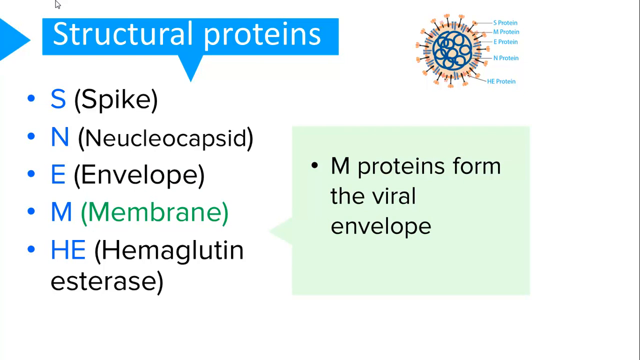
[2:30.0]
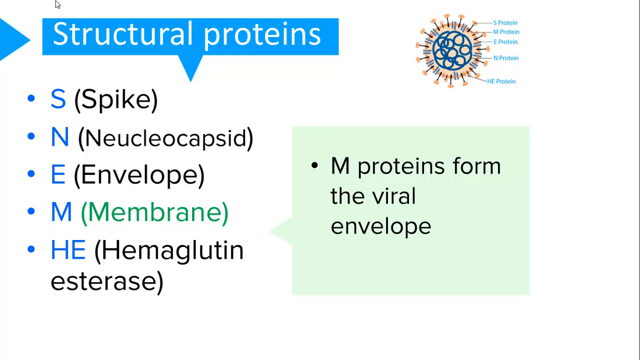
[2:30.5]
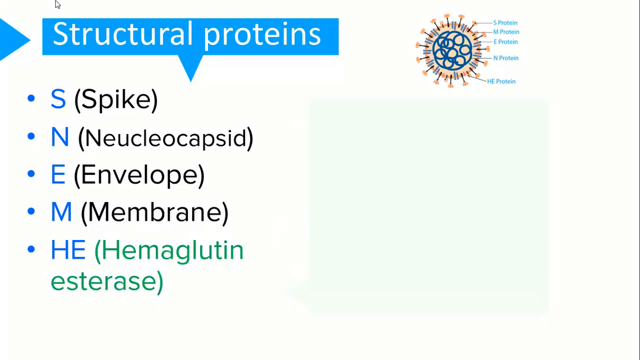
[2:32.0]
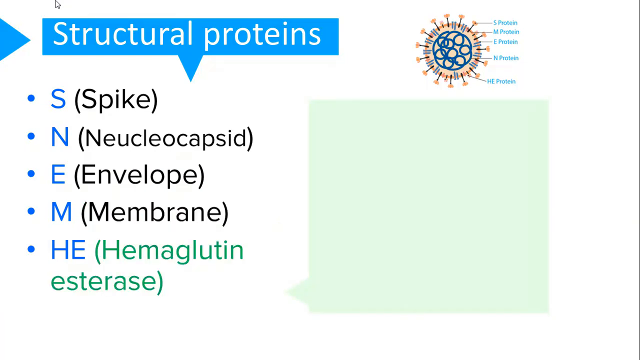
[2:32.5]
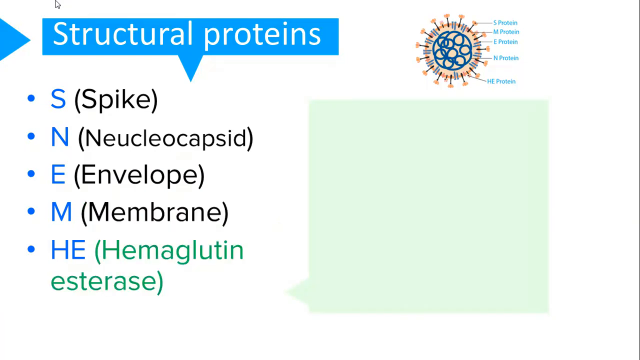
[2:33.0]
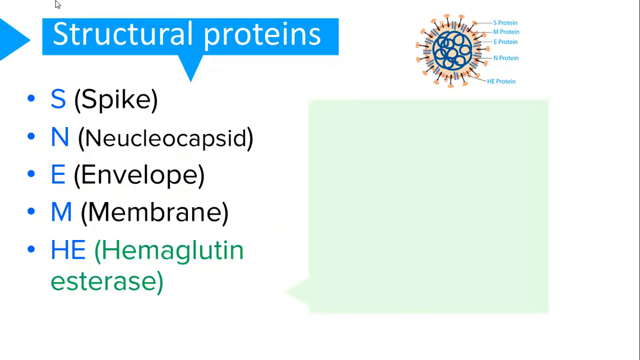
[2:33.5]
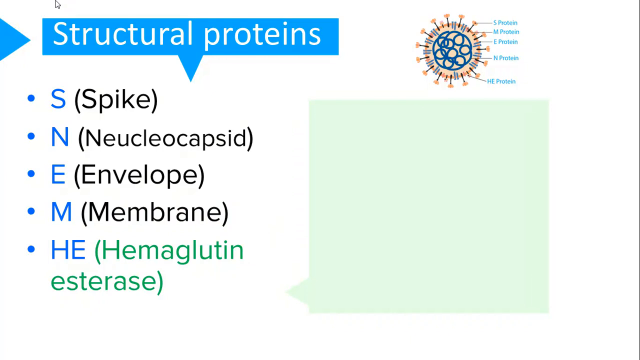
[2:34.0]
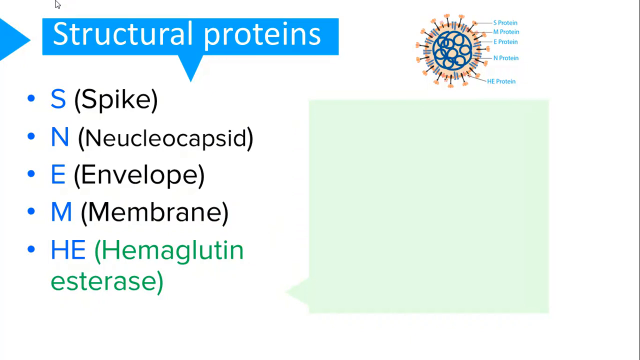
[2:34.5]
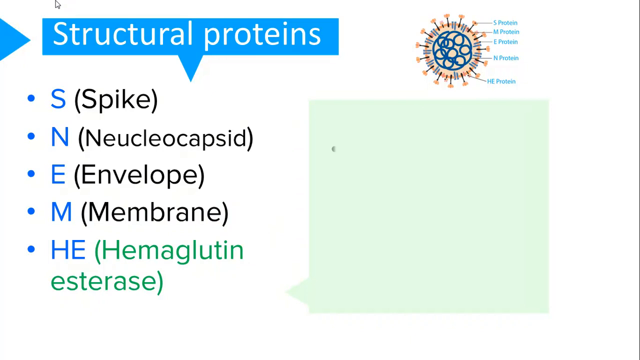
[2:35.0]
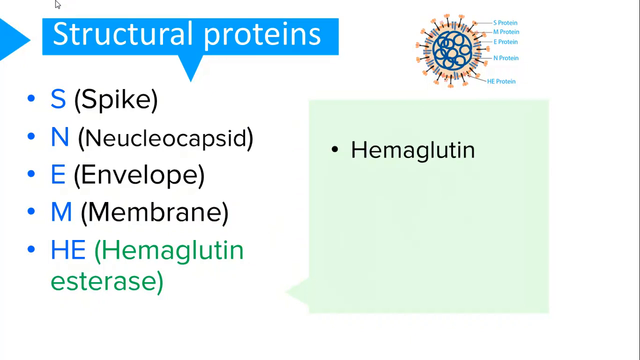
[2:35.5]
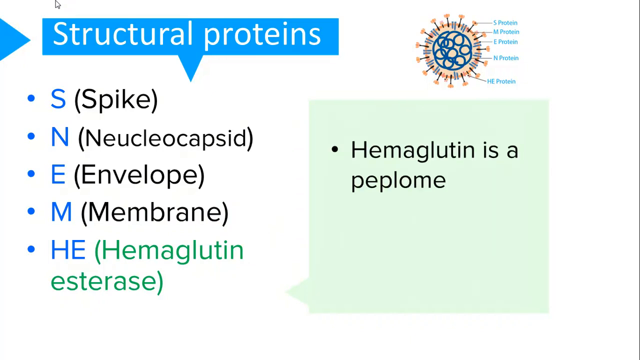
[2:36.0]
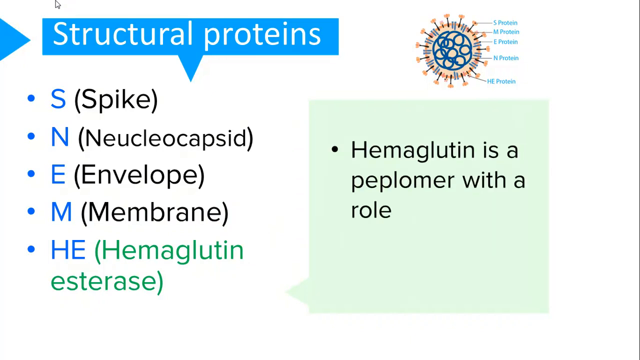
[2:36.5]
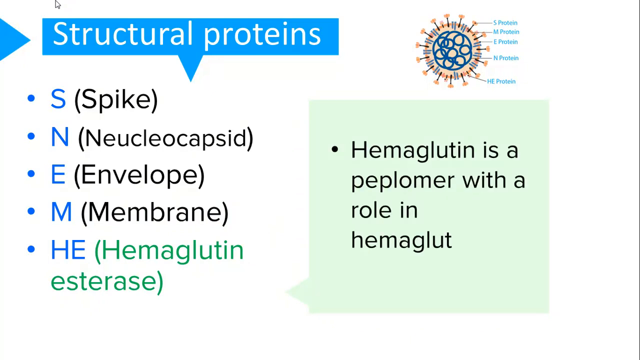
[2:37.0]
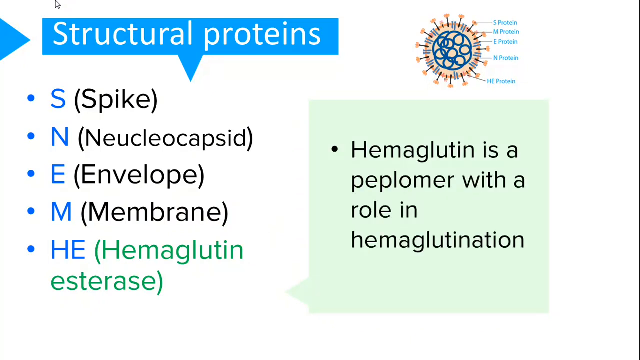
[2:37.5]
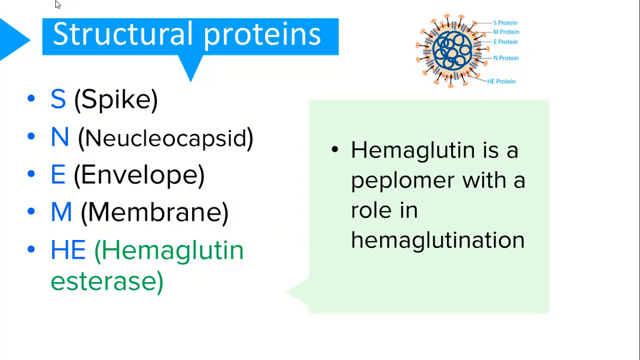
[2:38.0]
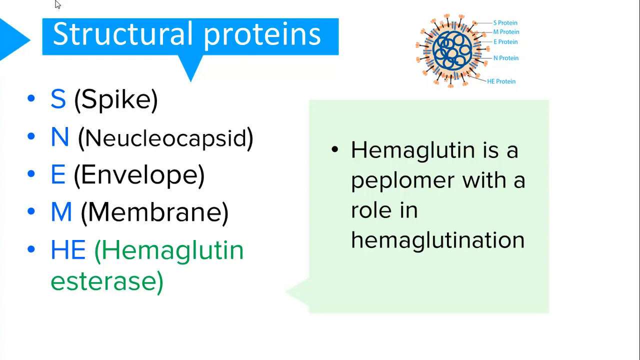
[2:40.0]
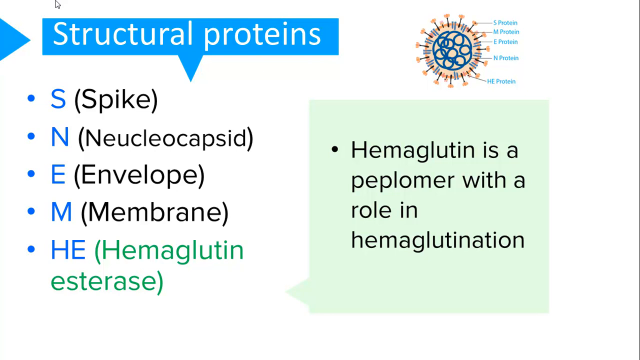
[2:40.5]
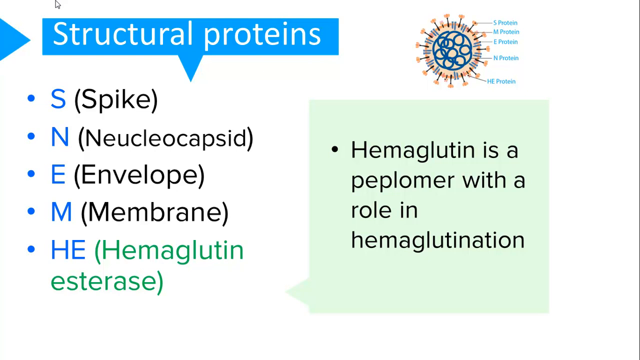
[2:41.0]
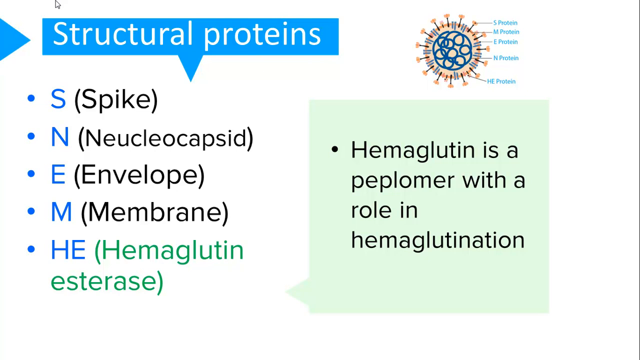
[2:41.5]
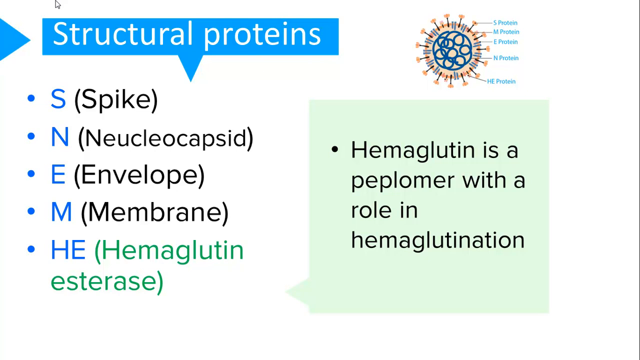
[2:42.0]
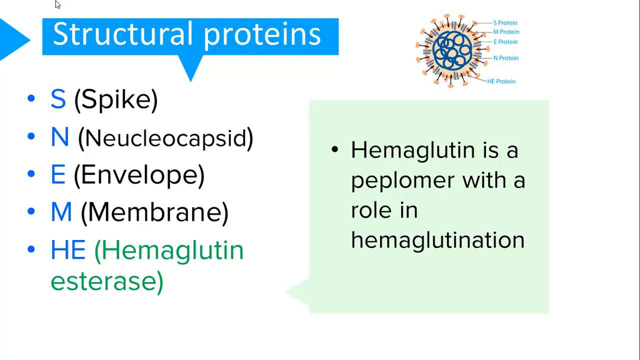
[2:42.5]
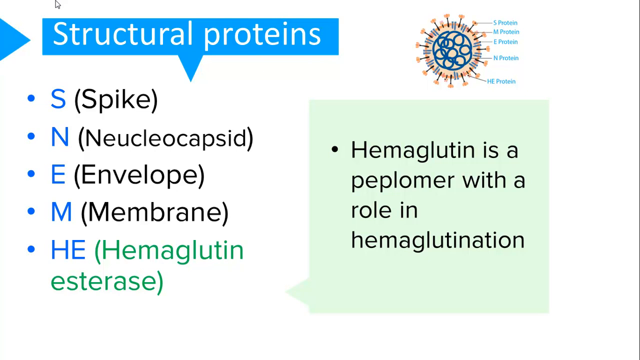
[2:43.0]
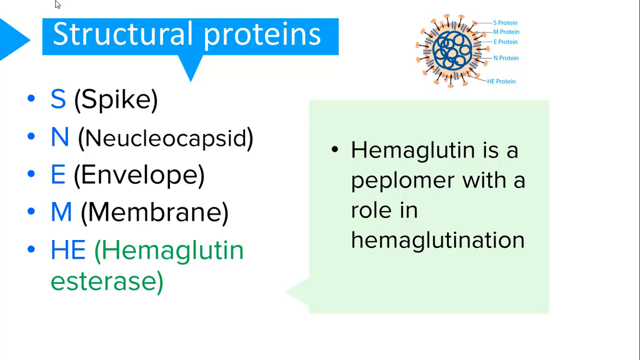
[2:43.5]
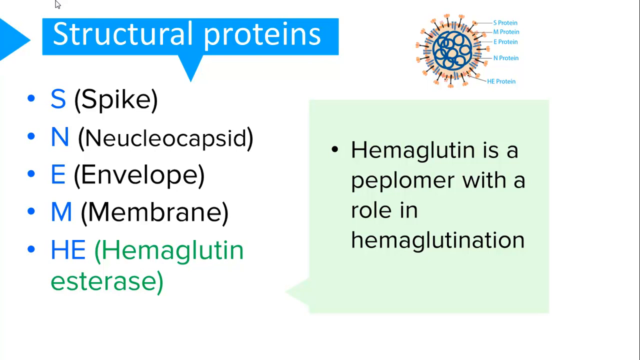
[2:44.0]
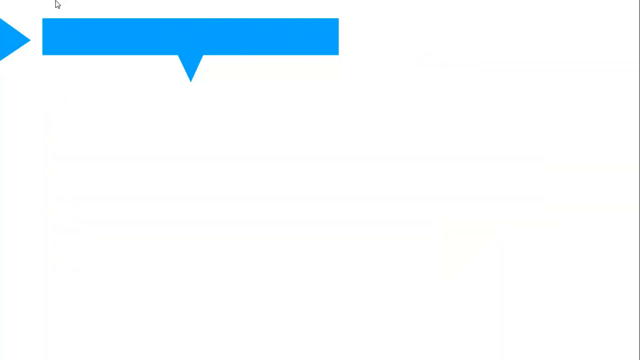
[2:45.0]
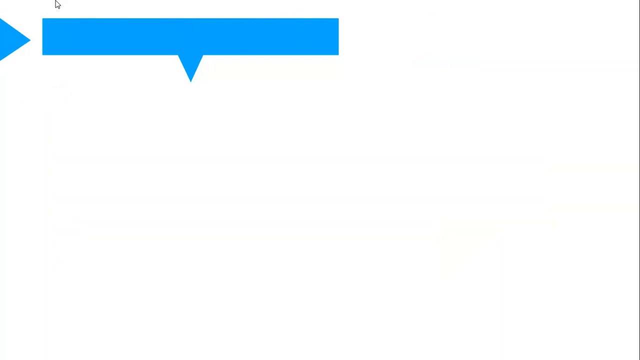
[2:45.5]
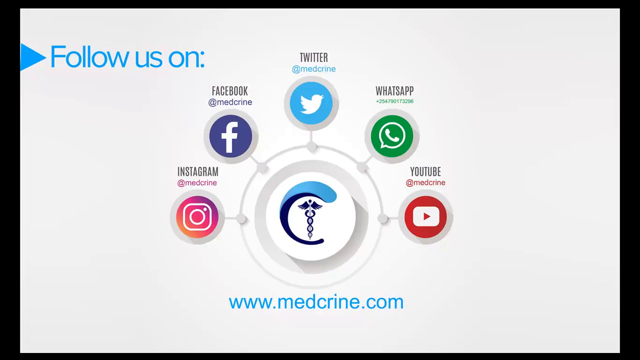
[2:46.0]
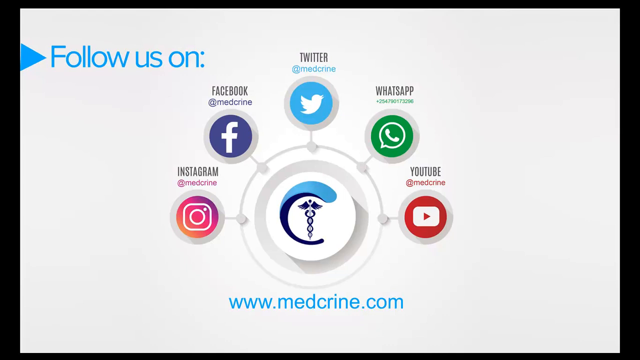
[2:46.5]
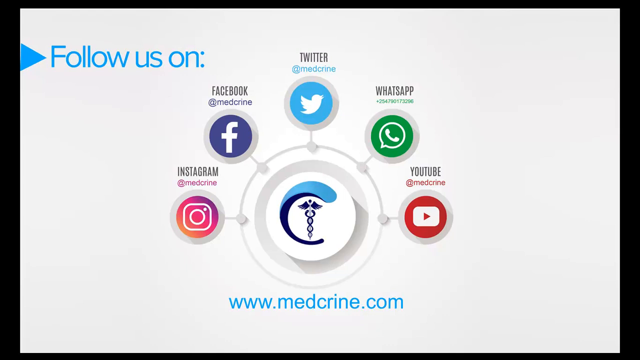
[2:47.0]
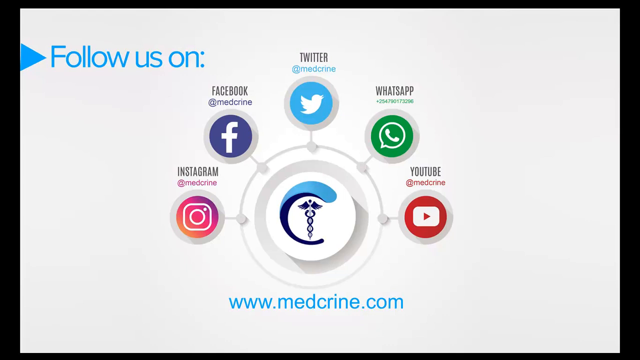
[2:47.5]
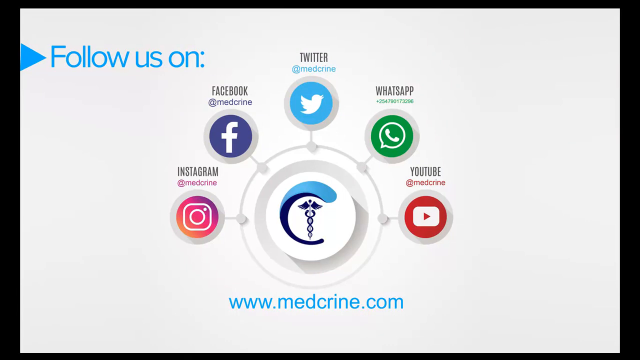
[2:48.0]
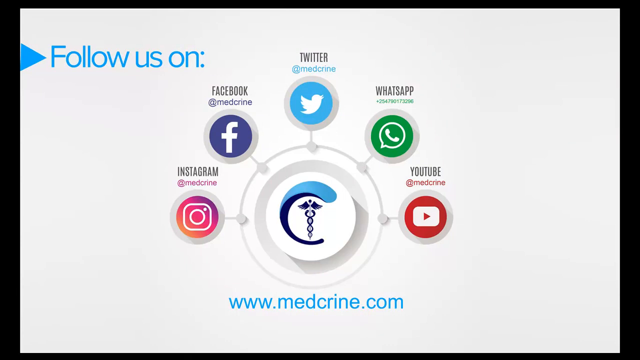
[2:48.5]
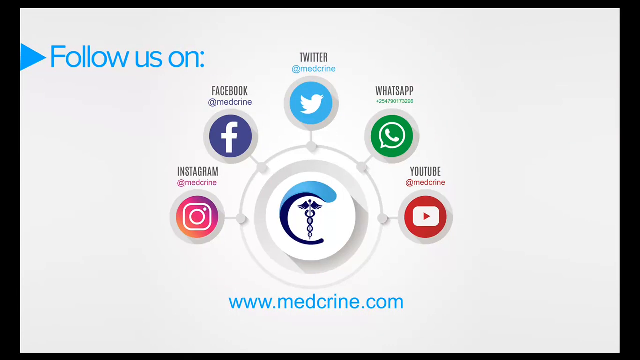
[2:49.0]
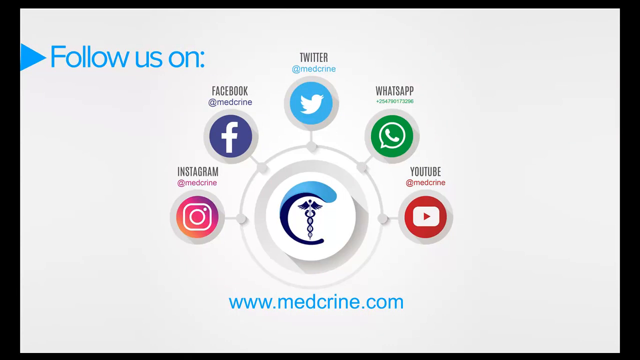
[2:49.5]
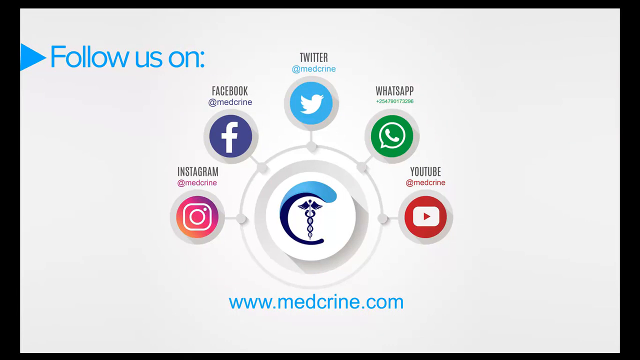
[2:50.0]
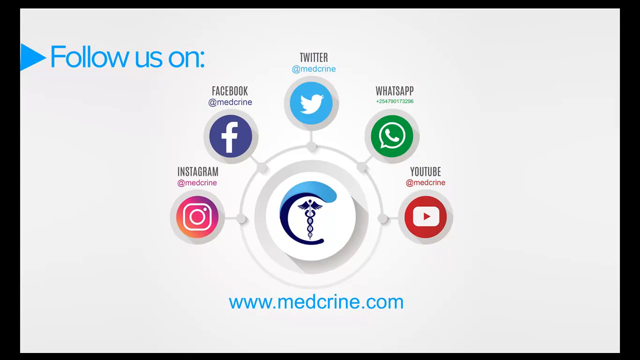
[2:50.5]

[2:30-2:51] The last item on the list, H.E., has the text inside the parentheses next to it highlighted in green, reading hemaglutin esterase. The green text box moves over a bit and black text appears at the top of it, with the first bullet point reading "hemaglutin is a peplomer with a role in hemagglutination". A slide is shown very briefly, seemingly an editing problem, showing a blank white screen with only a blank blue title box. The next screen shows the medical logo inside a white circle, with the URL "www.medcrine.com" underneath. Five social media icons are around the logo: Instagram, Facebook, Twitter, WhatsApp and YouTube. Blue text in the top left says "follow us on".